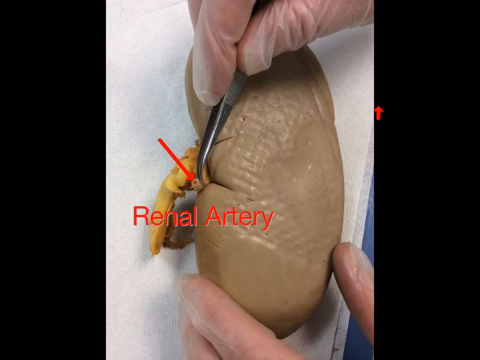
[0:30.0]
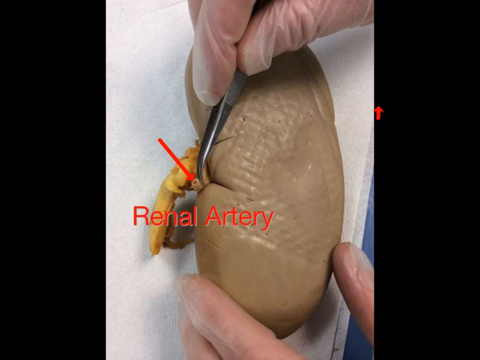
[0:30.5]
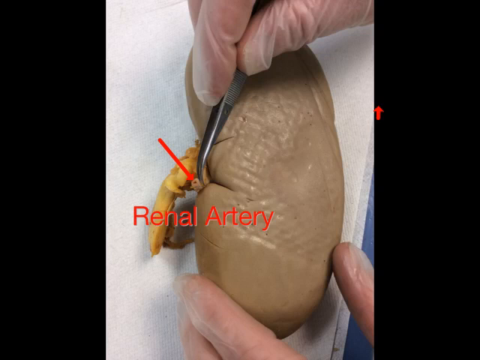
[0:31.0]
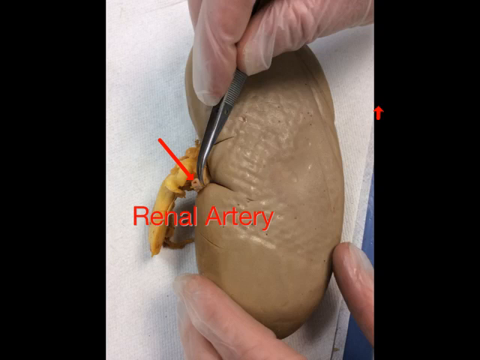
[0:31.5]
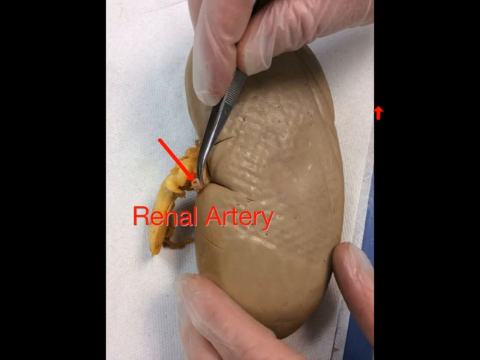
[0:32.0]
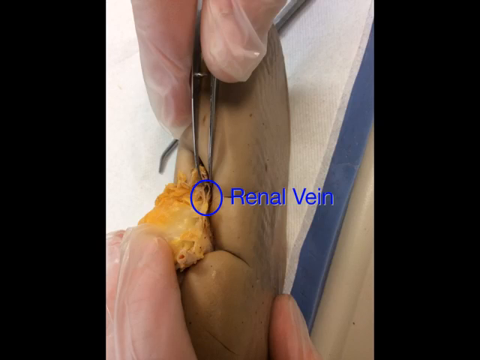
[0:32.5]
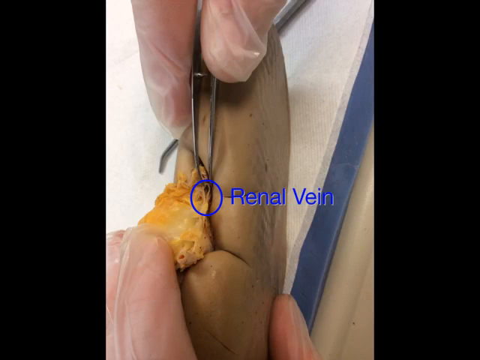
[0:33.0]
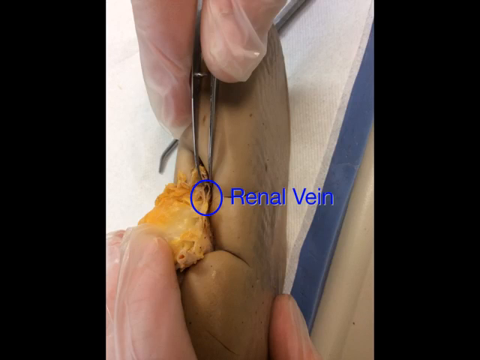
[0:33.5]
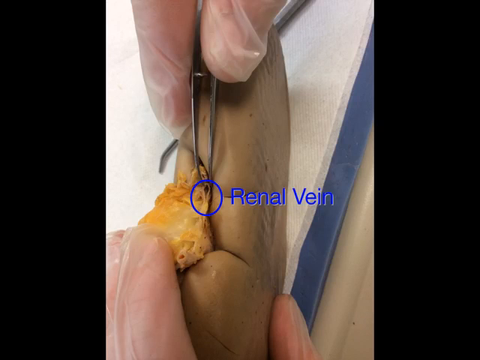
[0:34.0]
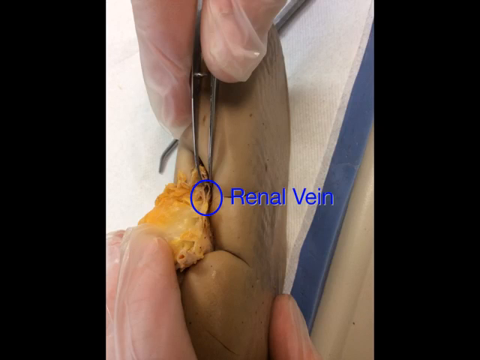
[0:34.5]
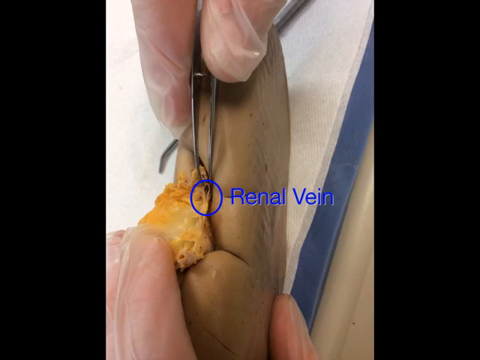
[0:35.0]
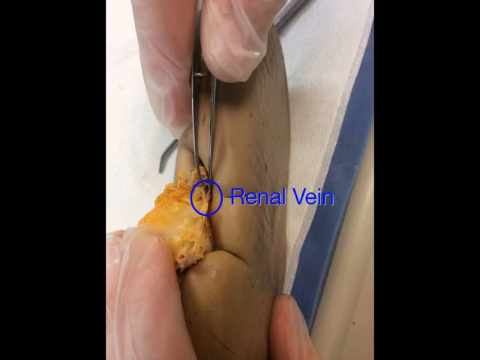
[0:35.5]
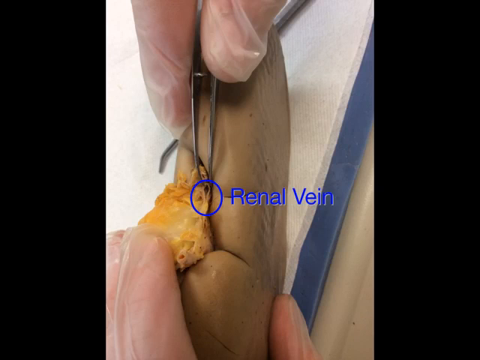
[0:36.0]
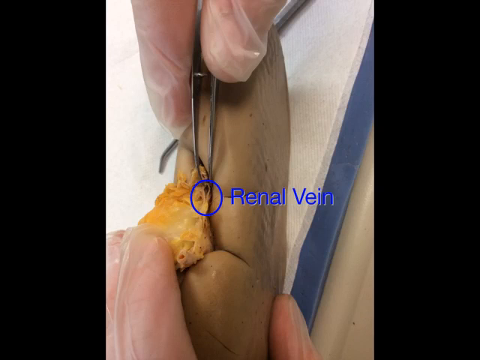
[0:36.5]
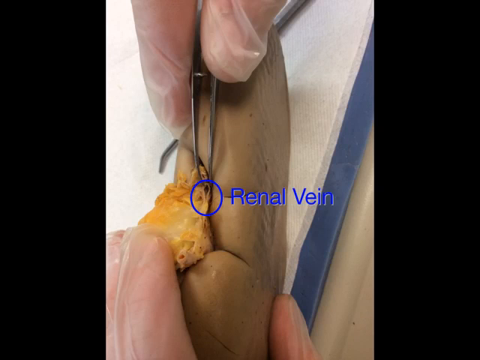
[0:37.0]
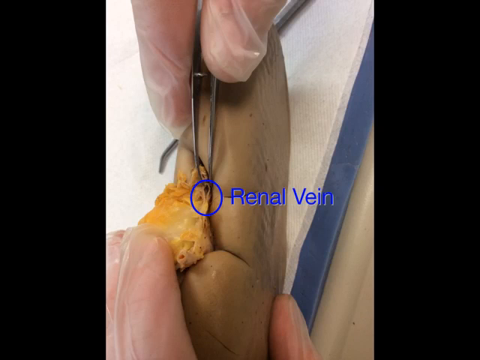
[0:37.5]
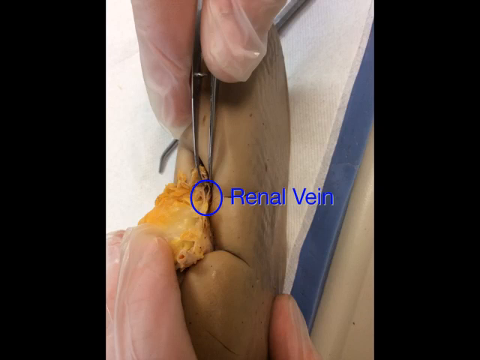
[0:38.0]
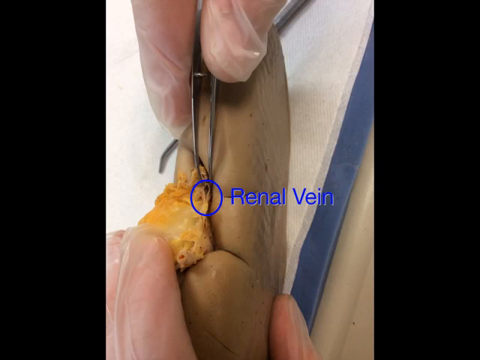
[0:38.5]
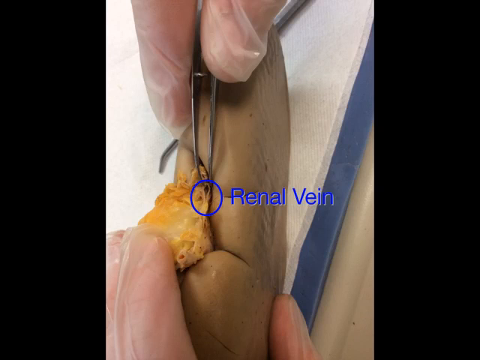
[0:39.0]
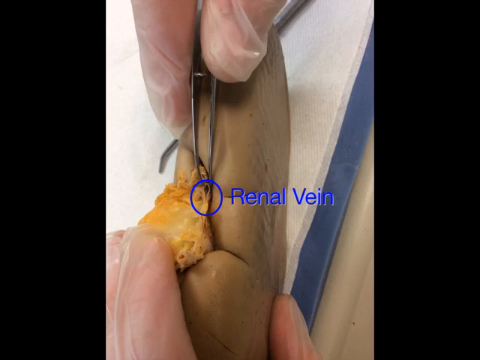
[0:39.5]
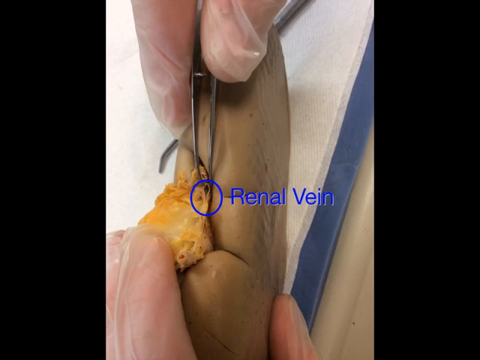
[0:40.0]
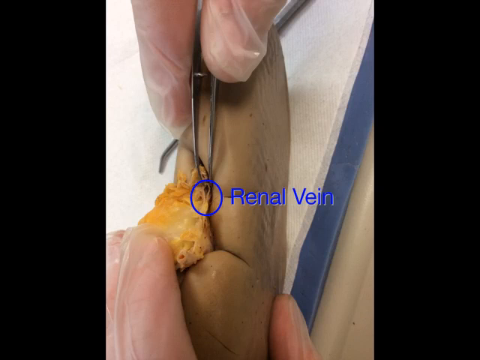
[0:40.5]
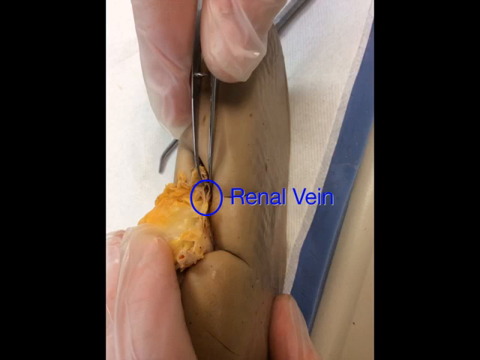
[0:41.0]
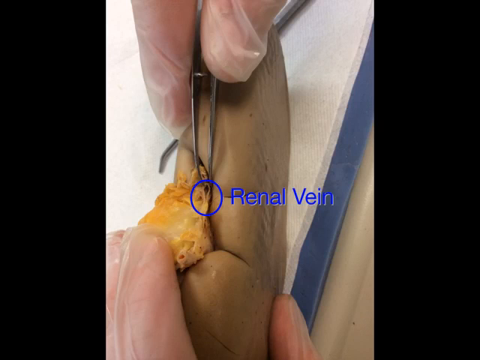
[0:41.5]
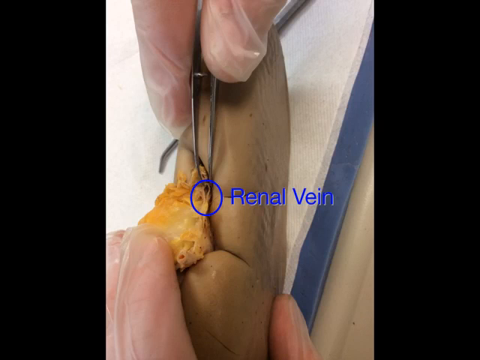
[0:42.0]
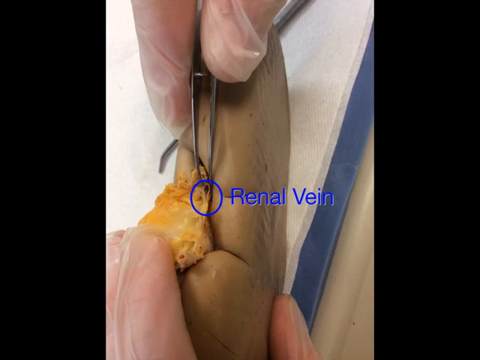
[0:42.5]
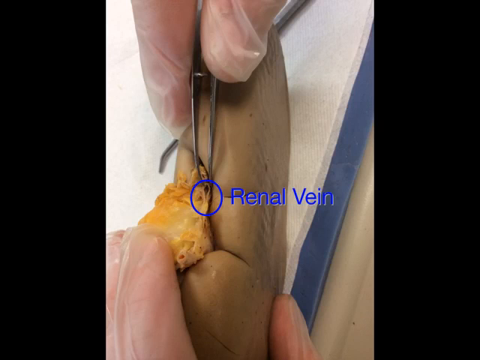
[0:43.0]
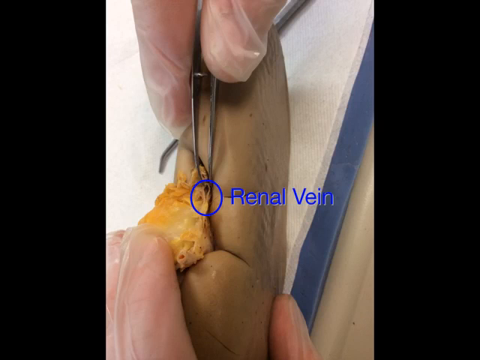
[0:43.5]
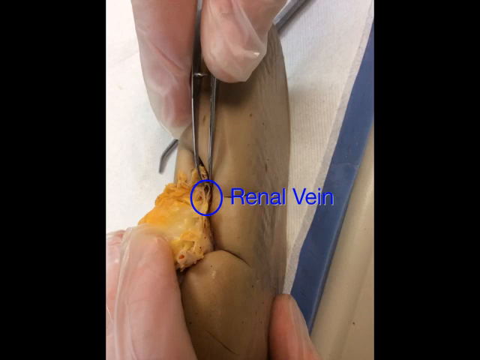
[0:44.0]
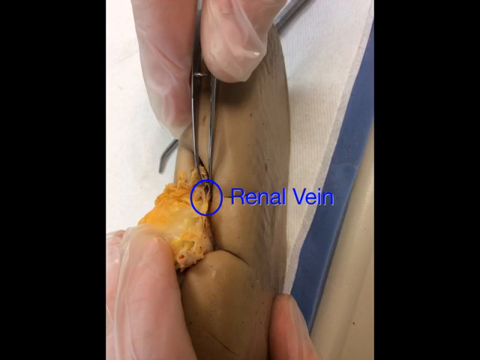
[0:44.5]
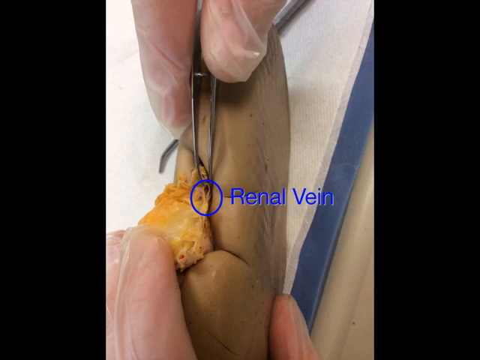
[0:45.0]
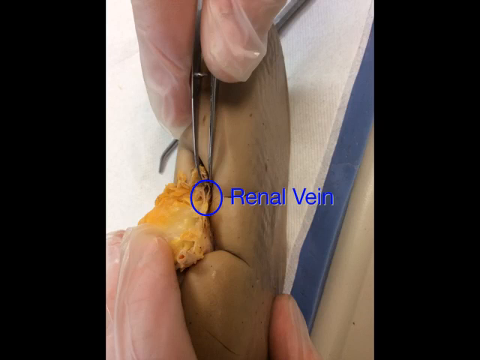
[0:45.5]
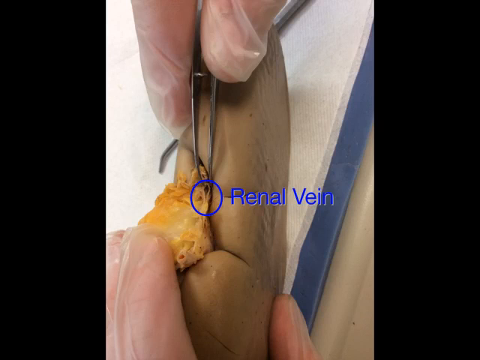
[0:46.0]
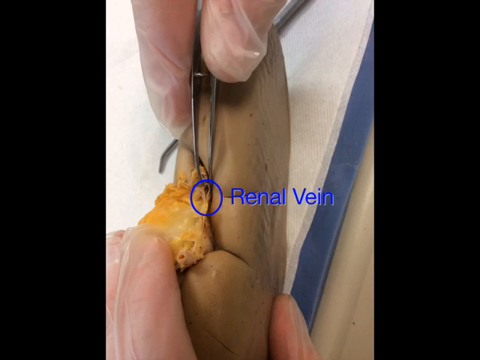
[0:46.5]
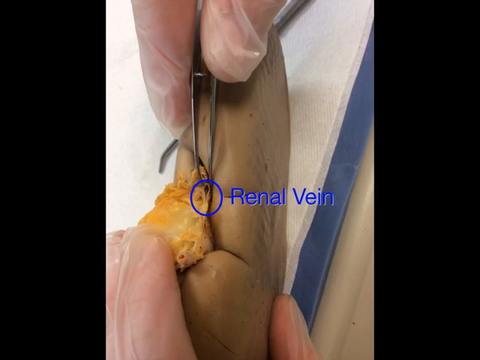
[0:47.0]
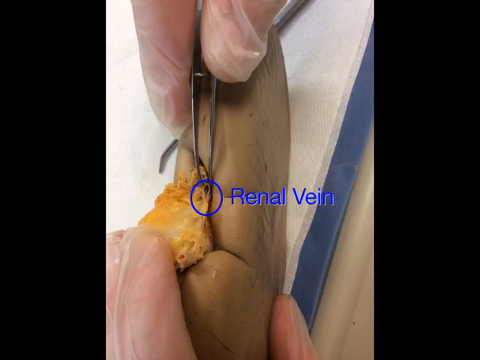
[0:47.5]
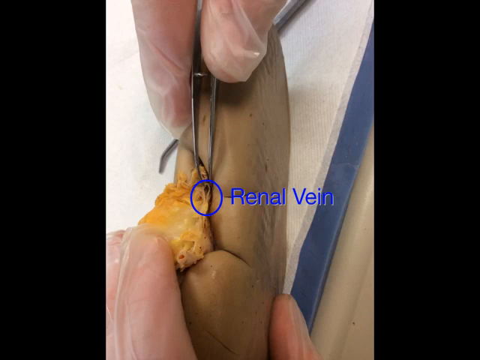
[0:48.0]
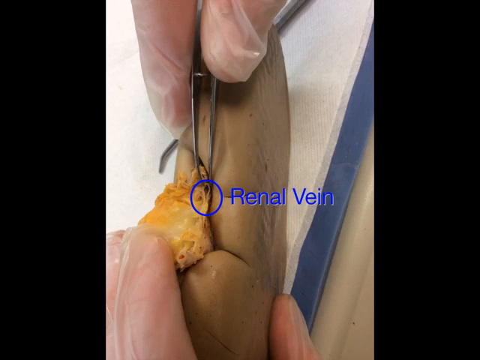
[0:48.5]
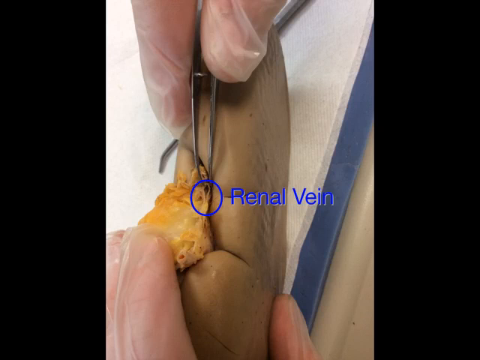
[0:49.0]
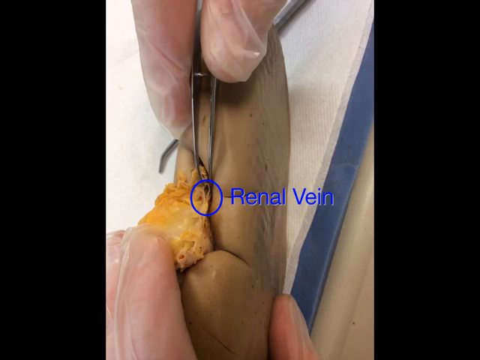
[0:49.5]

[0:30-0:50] A doctor or medical professional holds a human kidney, with the right hand on the top and the left hand on the bottom. The right hand holds tweezers, demonstrating where the renal artery is on the kidney. The renal vein is shown next: the person, apparently holding the lower part of the kidney with the left hand, has the tweezers between the fingers of the right hand, and a blue circle marks the end of the tweezers, indicating the renal vein.